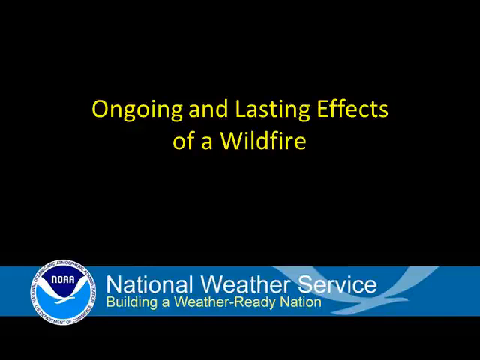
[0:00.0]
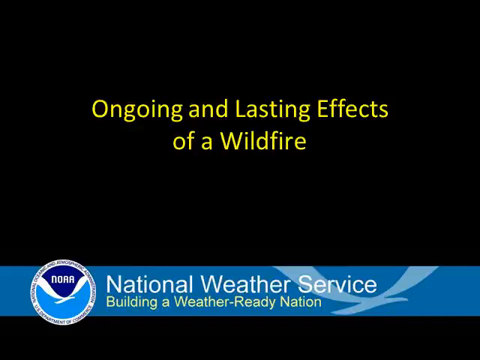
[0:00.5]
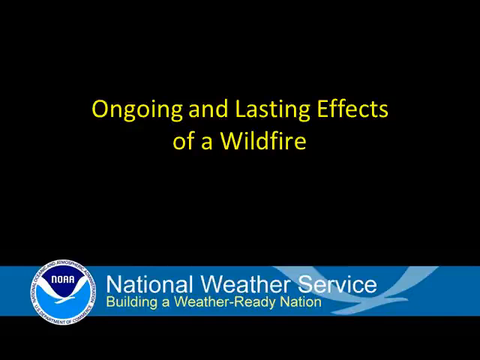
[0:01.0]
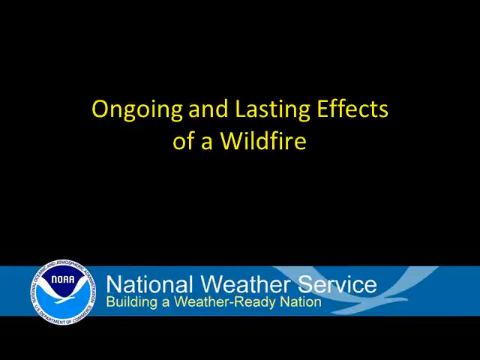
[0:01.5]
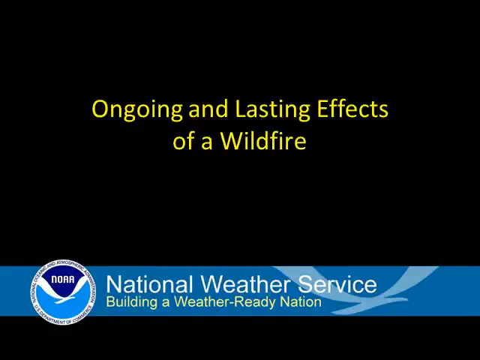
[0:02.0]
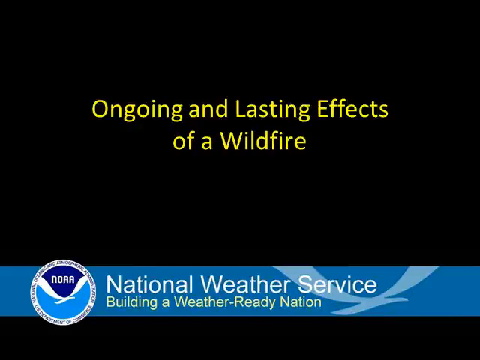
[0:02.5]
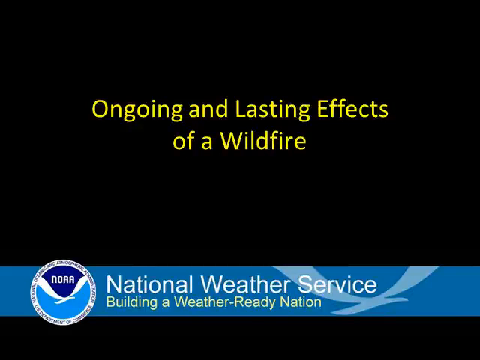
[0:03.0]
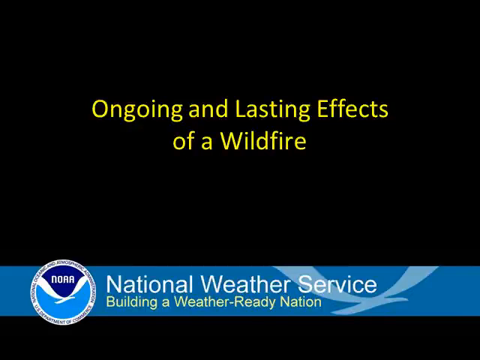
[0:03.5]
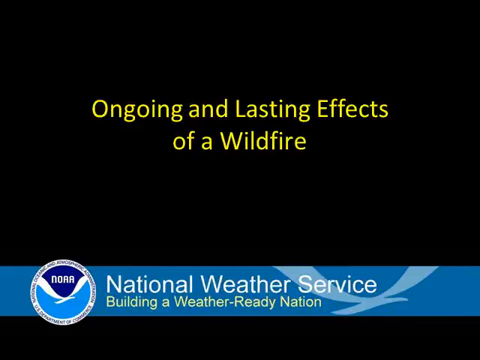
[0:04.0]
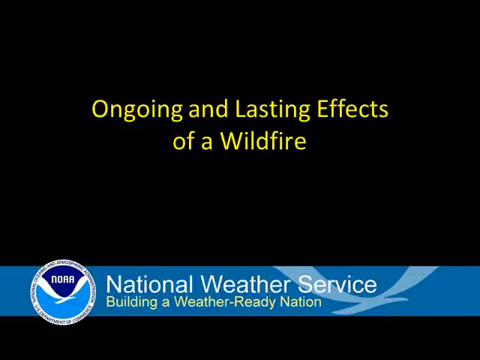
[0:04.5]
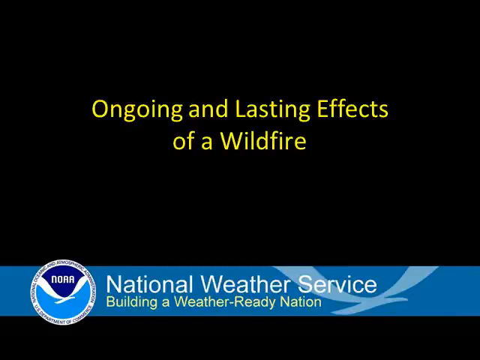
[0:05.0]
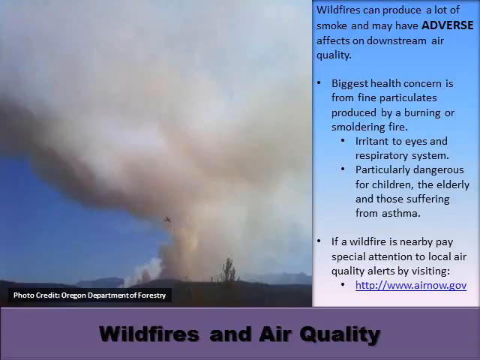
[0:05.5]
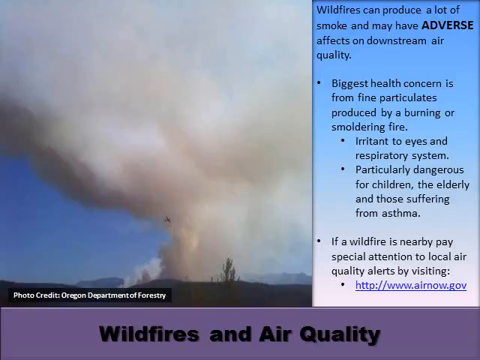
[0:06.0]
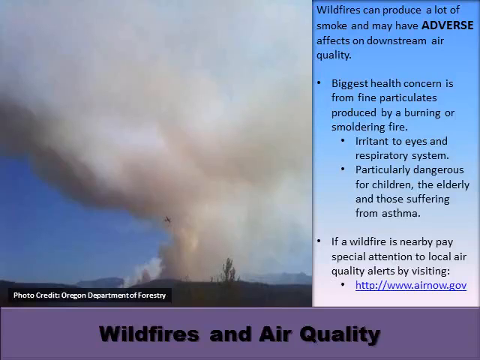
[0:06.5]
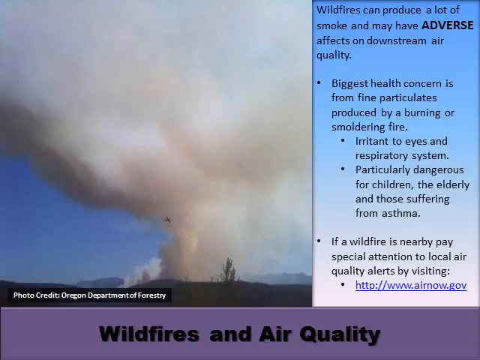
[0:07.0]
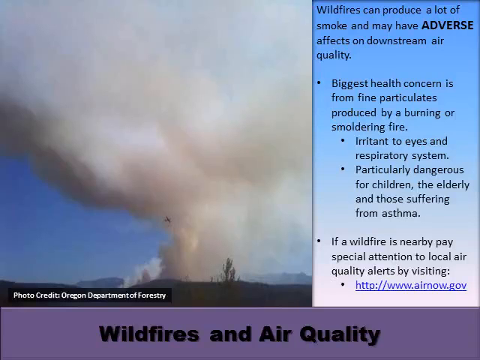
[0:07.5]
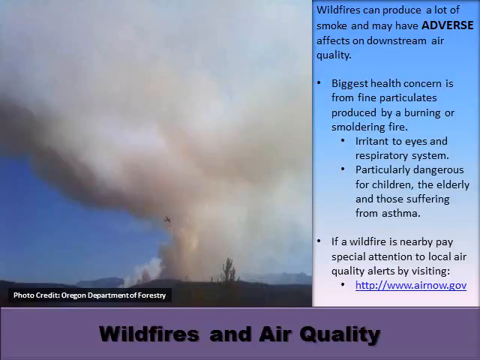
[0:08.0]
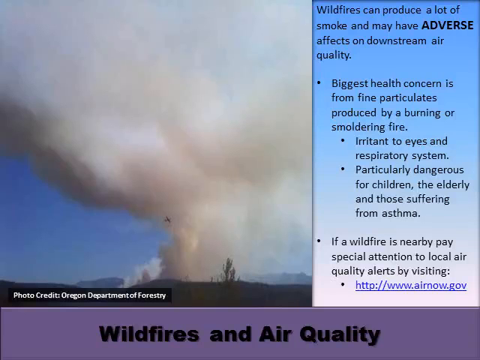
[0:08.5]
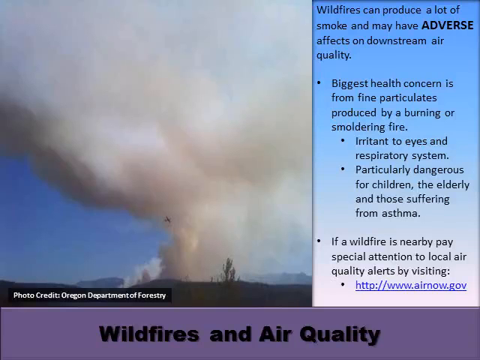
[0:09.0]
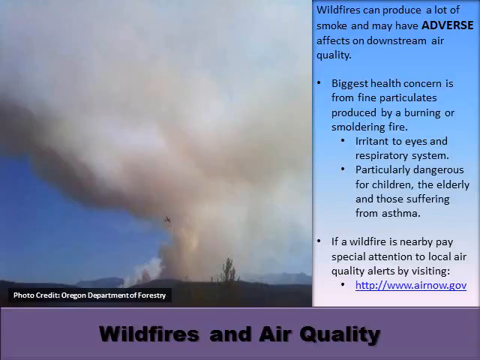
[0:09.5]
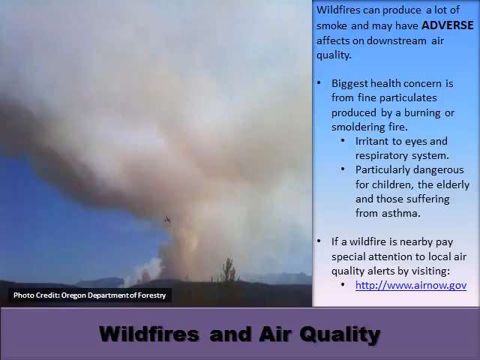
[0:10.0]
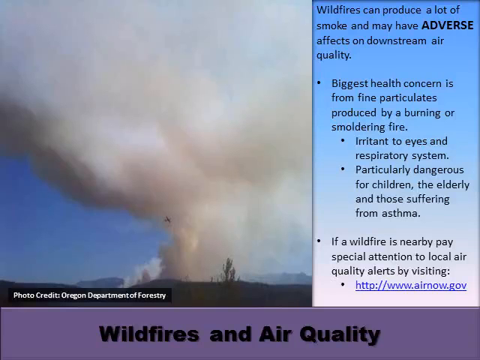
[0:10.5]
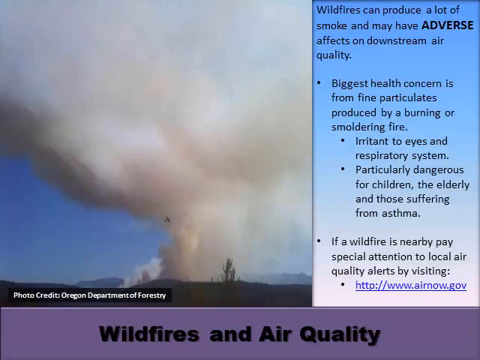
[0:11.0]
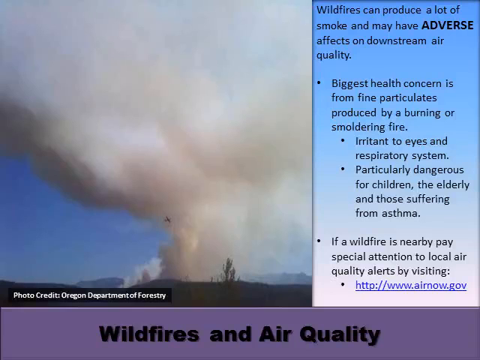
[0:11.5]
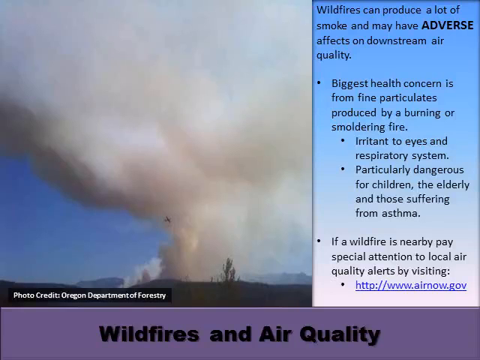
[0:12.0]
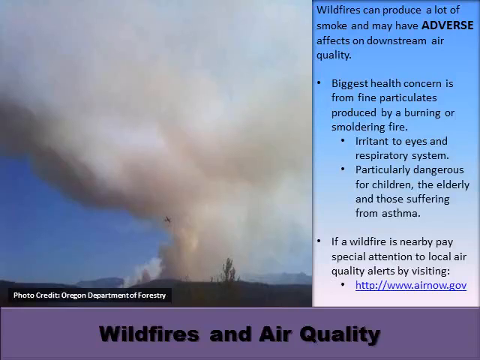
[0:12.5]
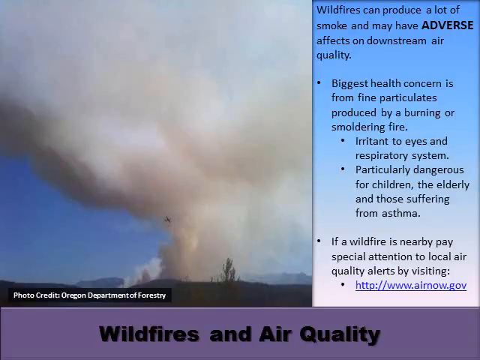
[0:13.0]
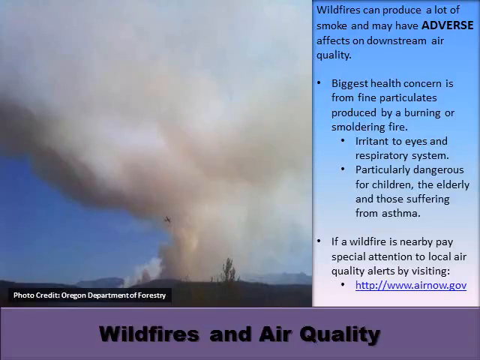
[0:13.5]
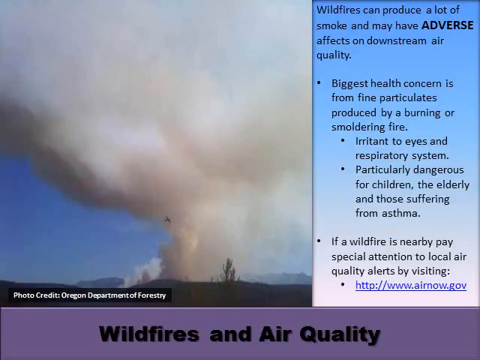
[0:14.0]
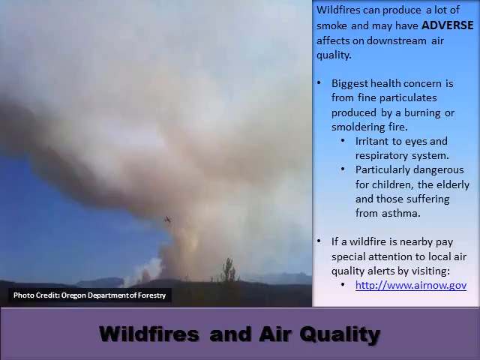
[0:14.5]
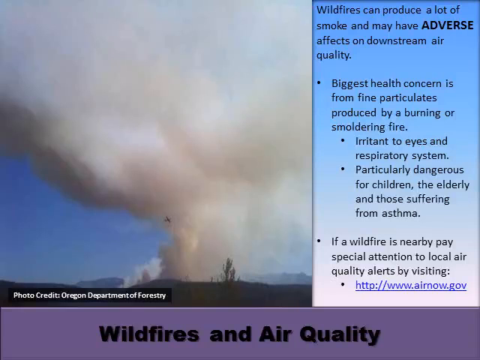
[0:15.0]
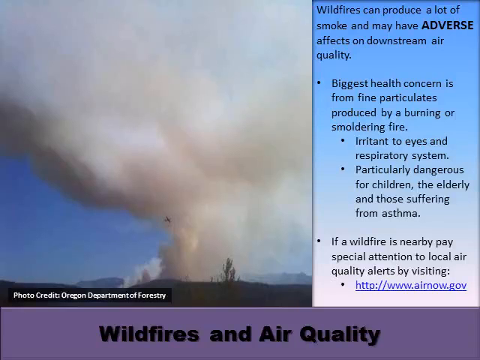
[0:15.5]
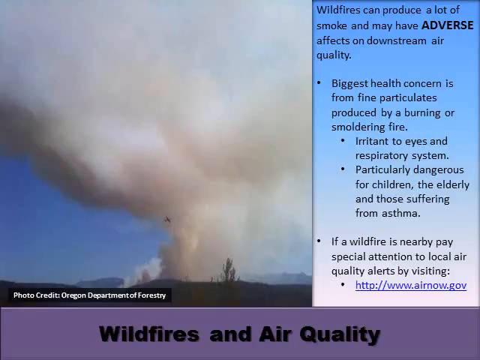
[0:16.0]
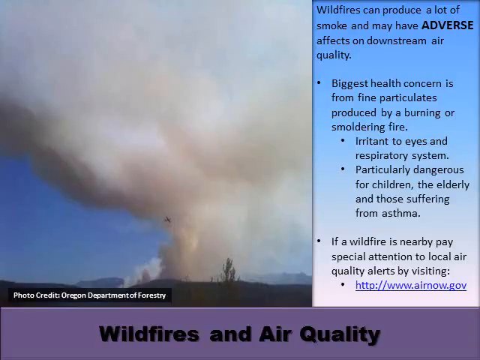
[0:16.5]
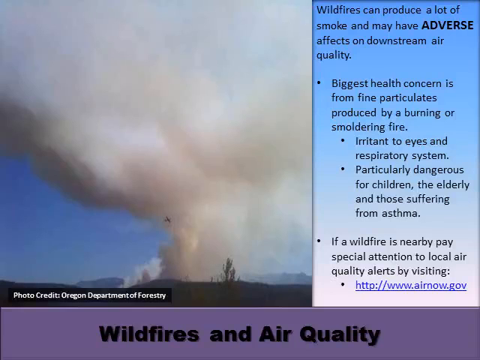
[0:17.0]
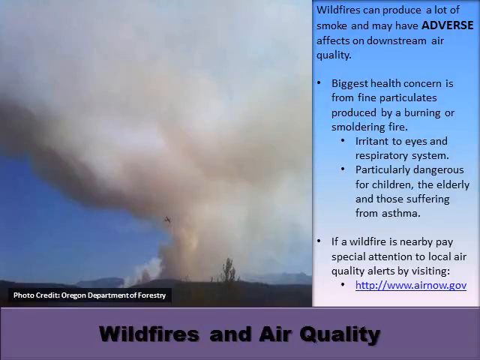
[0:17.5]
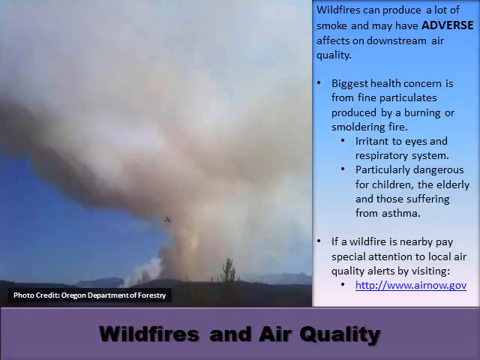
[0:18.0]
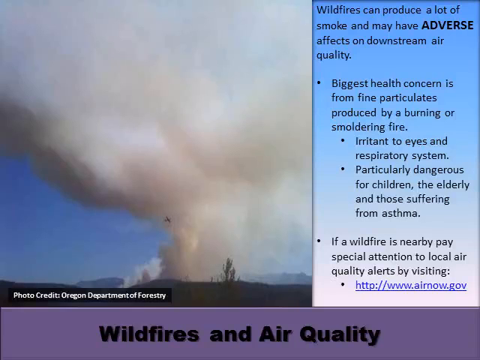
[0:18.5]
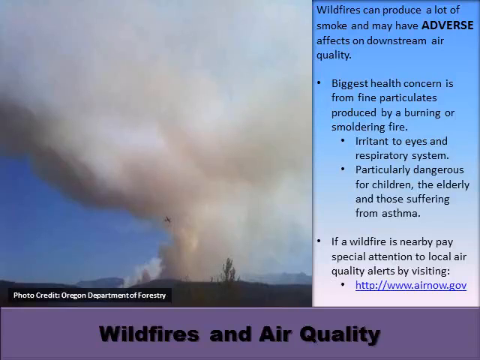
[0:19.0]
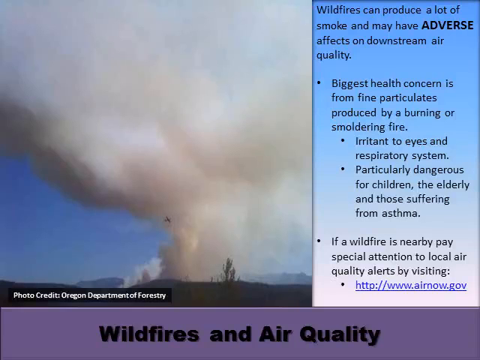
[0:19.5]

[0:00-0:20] The video is from the National Weather Service. A NOAA logo is at the bottom left, along with text that reads "Building a weather-ready nation." On a black background, yellow text in the middle reads "Ongoing and lasting effects of a wildfire." The next slide, on wildfires and air quality, has two panes. The left pane shows smoke on what looks like a mountaintop or hilly area, with a photo credit from the Oregon Department of Forestry. The right pane holds text in bullet-point format: "Wildfires can produce a lot of smoke and may have adverse effects on downstream air quality. Biggest health concern is from fine particulates produced by a burning or smoldering fire, irritants to eyes and respiratory system" and "If a wildfire is nearby, pay special attention to local air quality alerts by visiting airnow.gov." The URL is a hyperlink.